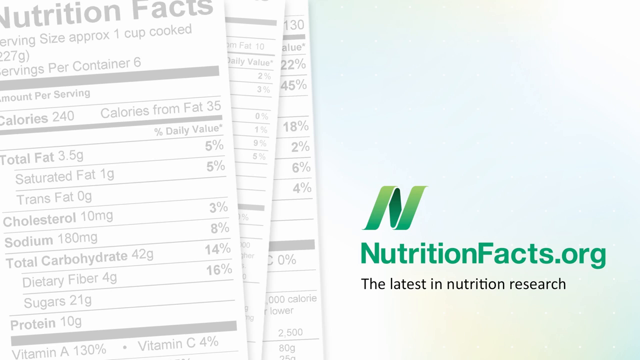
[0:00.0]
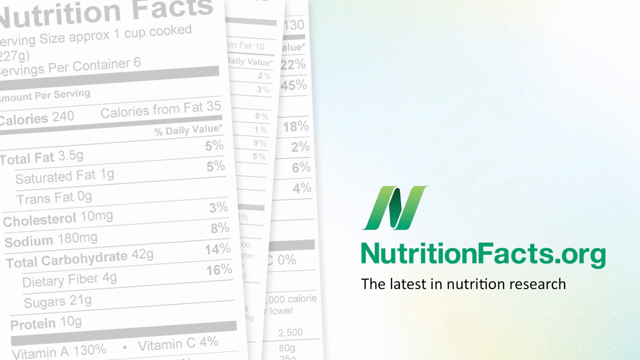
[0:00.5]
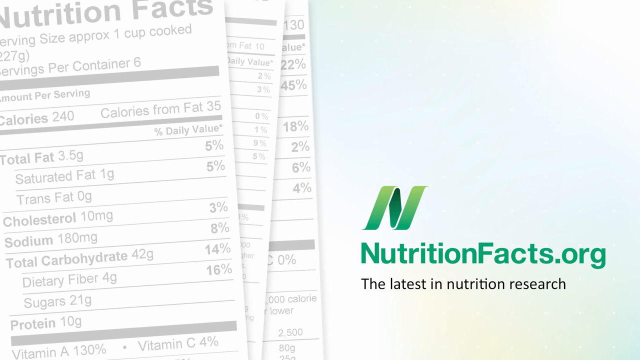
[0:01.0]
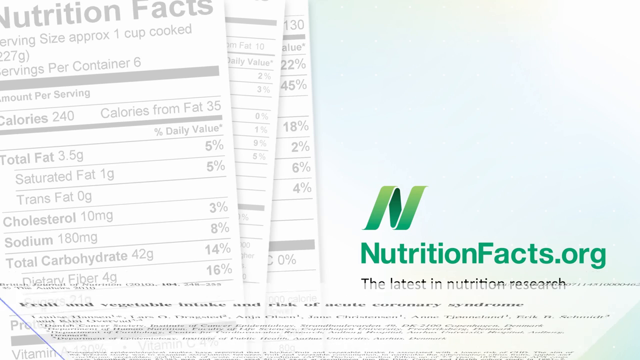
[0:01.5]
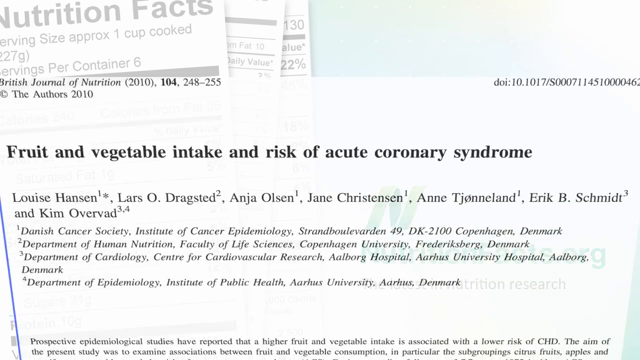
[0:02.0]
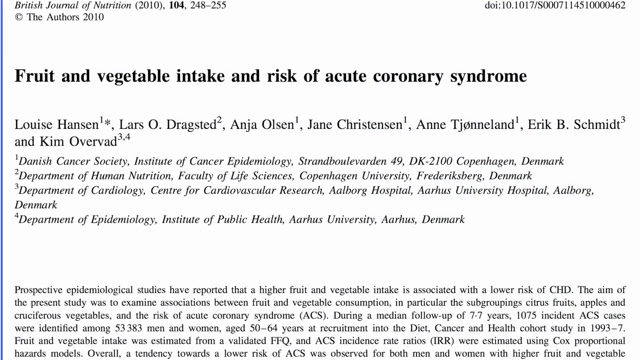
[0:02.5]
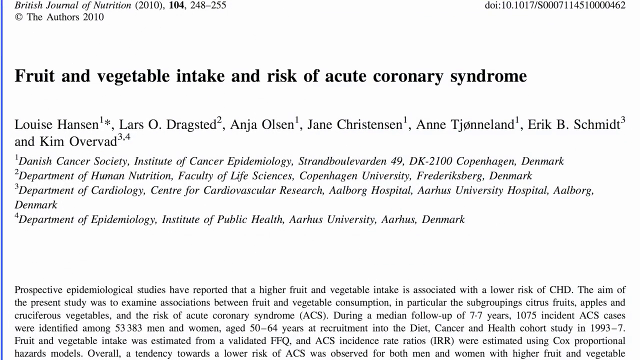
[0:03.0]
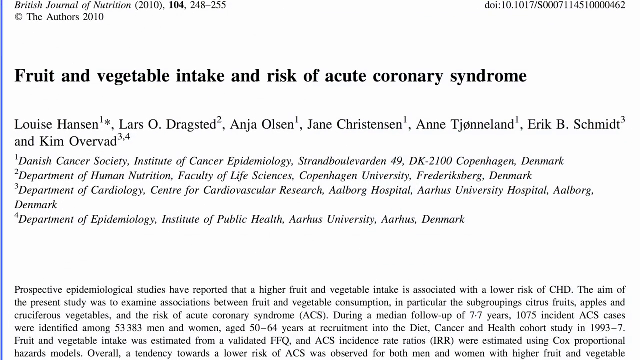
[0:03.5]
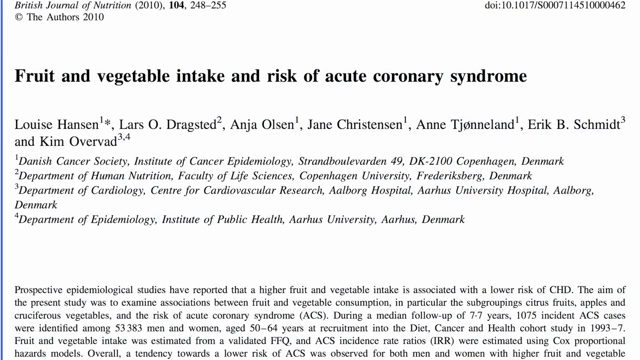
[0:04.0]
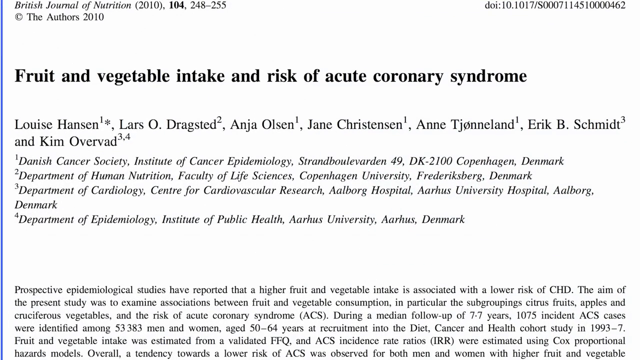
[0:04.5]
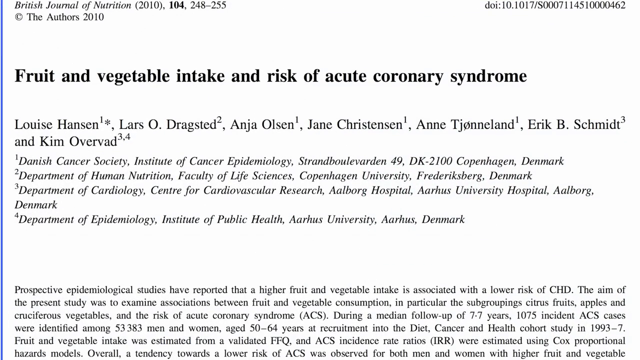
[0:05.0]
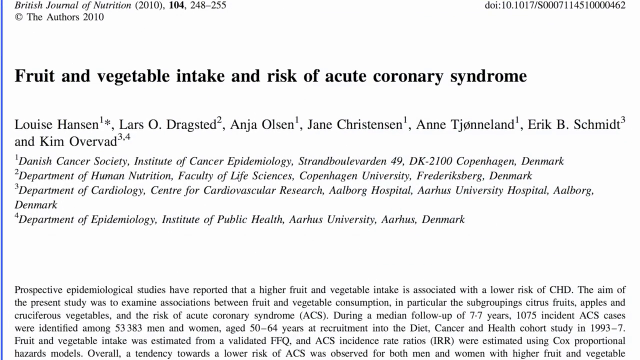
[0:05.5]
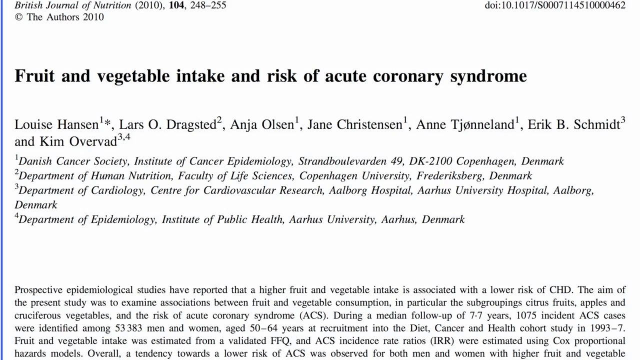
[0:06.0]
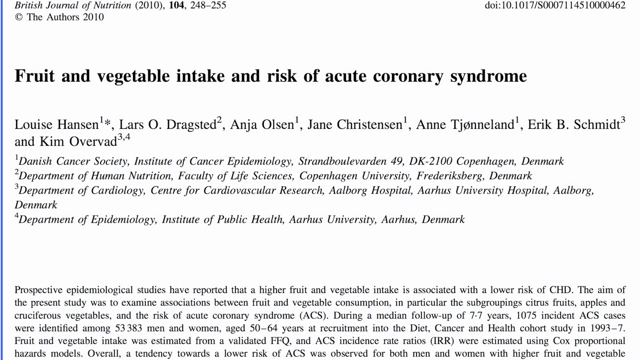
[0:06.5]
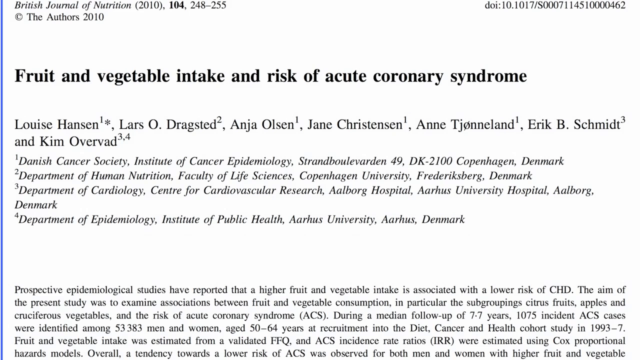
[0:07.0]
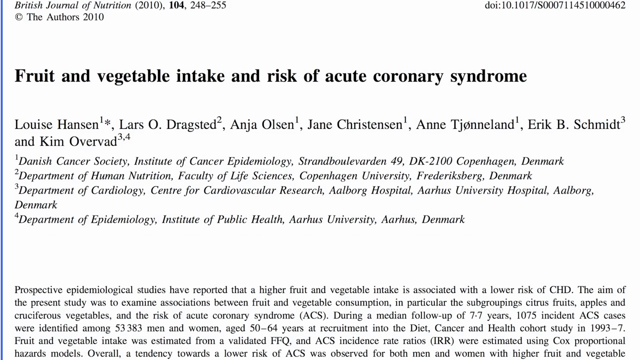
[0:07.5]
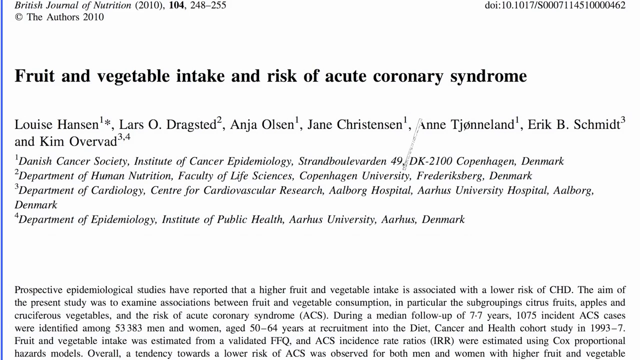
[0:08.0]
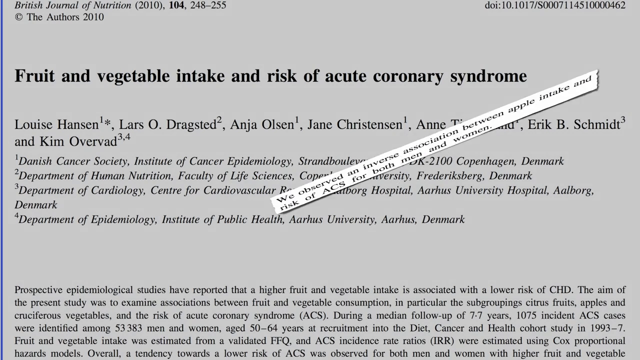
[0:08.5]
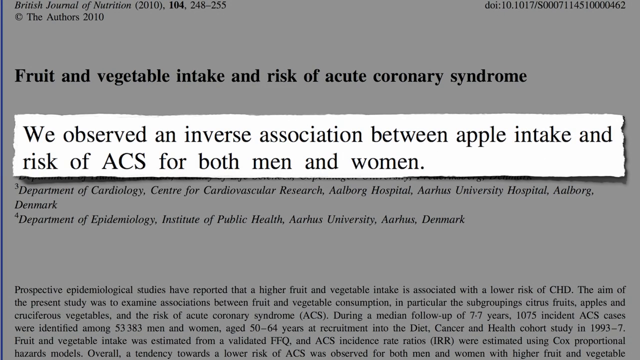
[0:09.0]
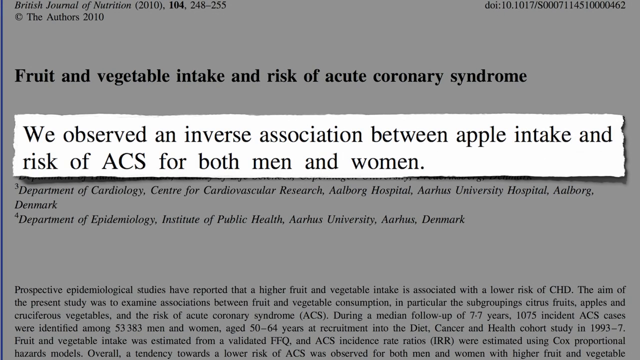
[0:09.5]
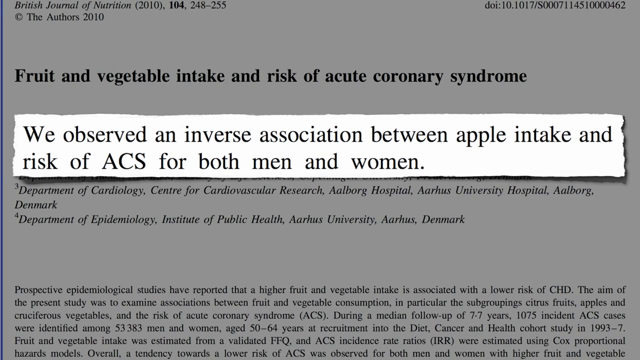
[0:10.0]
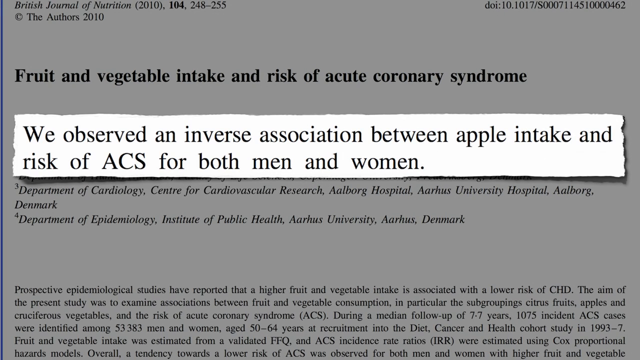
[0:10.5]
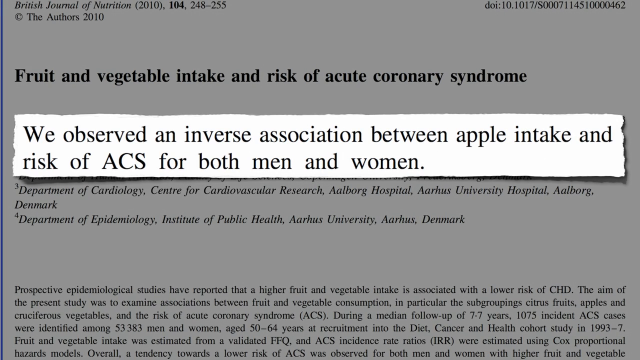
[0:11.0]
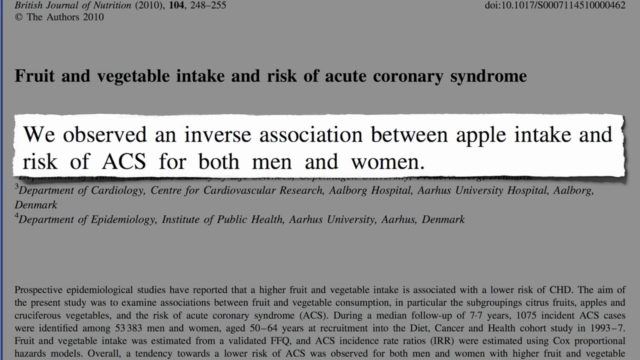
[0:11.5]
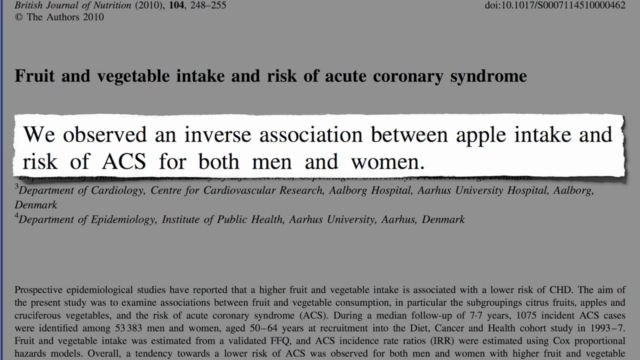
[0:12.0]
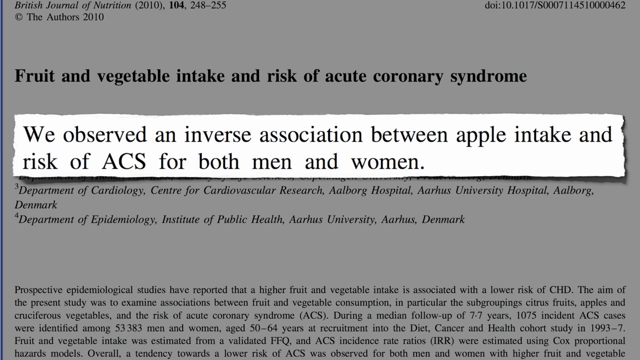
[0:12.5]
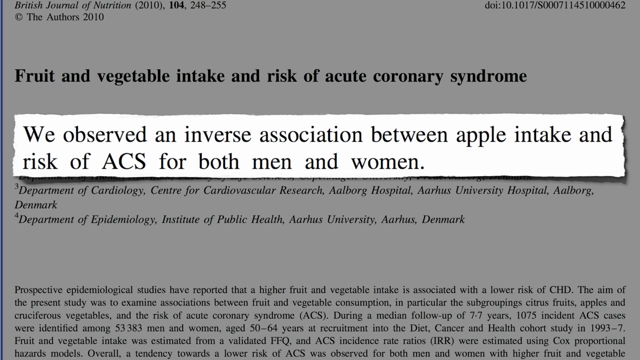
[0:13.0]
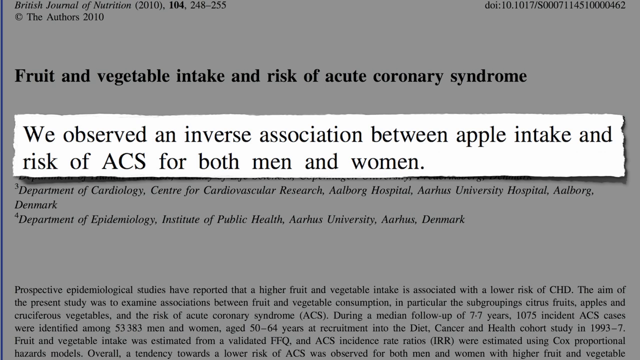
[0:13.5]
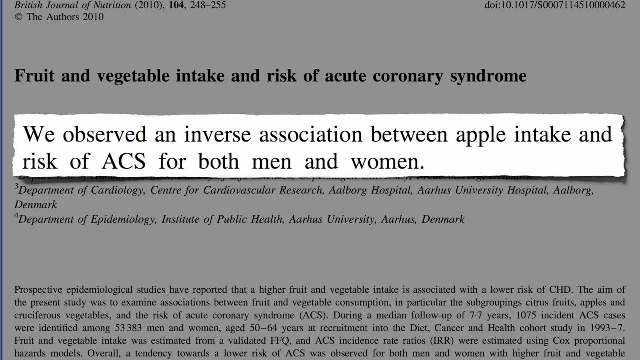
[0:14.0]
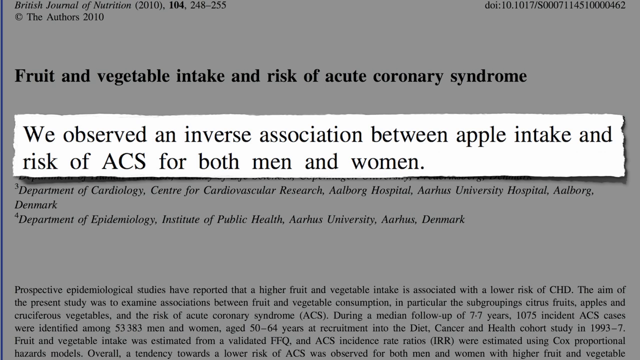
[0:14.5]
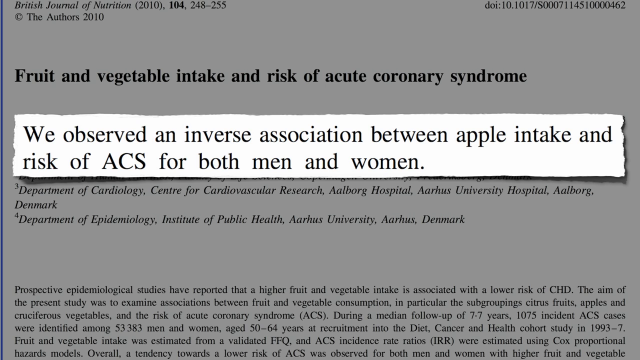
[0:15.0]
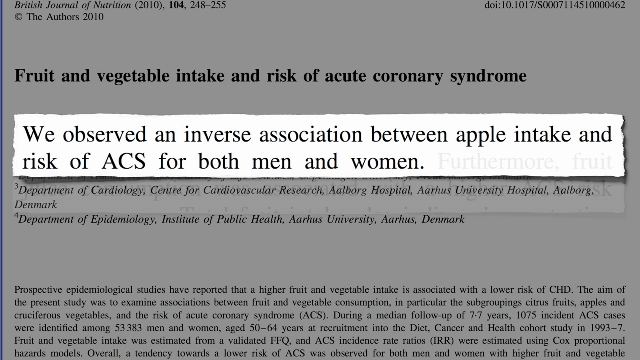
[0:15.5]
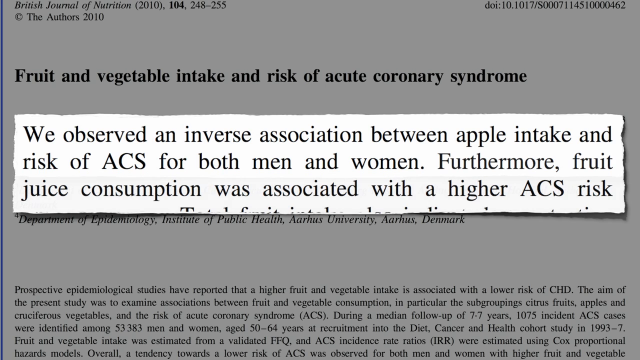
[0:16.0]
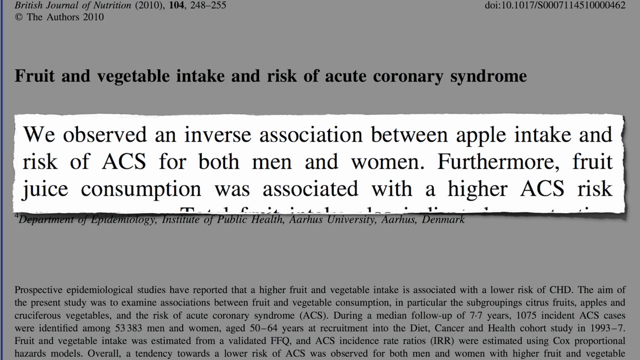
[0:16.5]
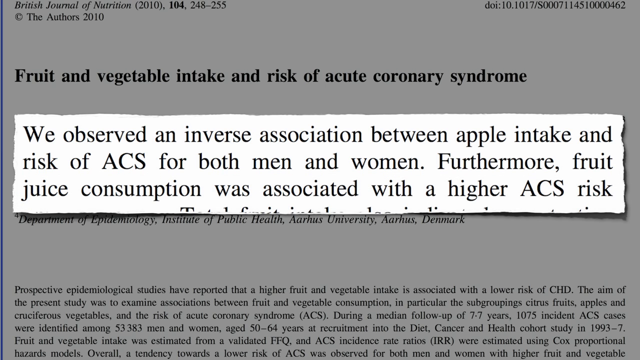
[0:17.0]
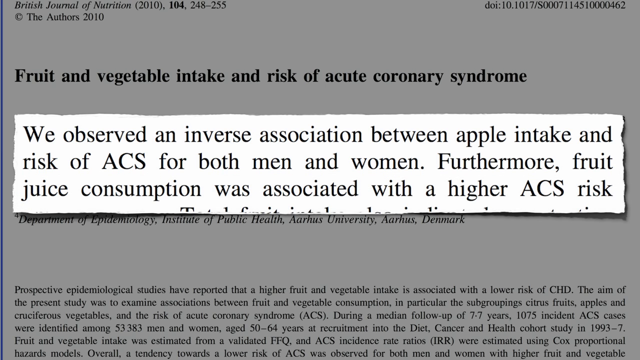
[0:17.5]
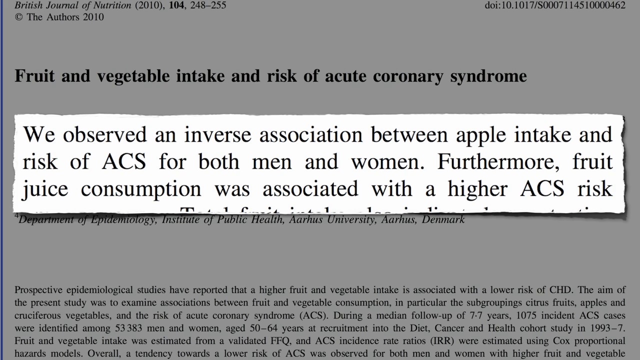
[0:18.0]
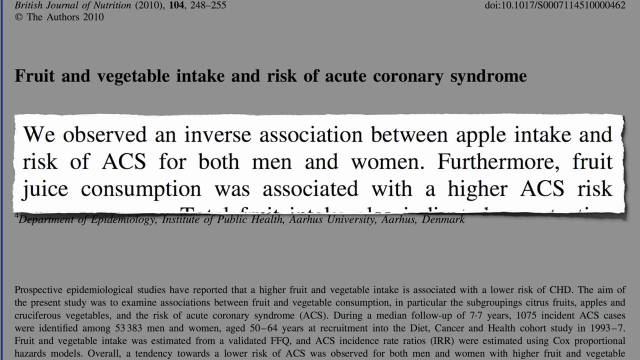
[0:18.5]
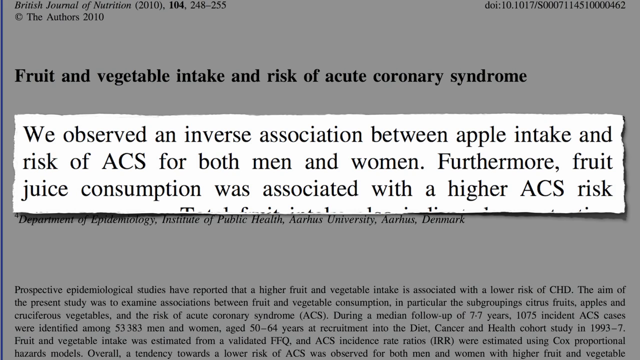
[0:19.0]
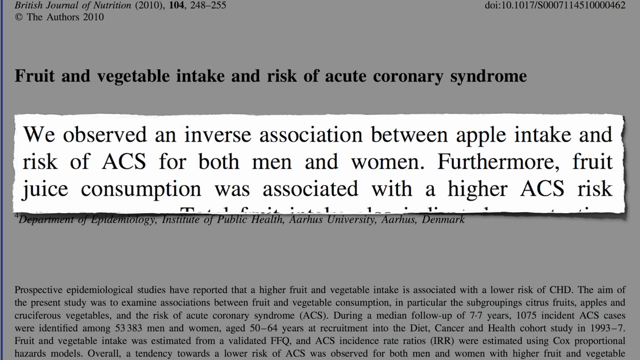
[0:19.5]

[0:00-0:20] The video is titled nutritionfacts.org, shown in green font on the right, with the text "the latest in nutrition research." On the left, very faint in the background, is one of the nutrition labels usually found on the side of a package; it has three slides of something, but only the front, first slide is really visible. The video then moves to a new slide showing the British Journal of Nutrition 2010 104 258-255, the author's copyright 2010, and the title "fruit and vegetable intake and risk of acute coronary syndrome," by Louise Hansen, Lars O. Dragsted, Anya Olsen, Jane Christensen, Anya Thion-Land, Eric B. Schmidt and Kim Overvaard, from the Danish Cancer Society in Denmark. The very bottom of the slide is hard to read, but it says "perspective studies have reported that a high fruit and vegetable intake is associated with a lower risk of CHD. The aim of the present study was to examine associations between fruit and vegetable consumption particularly in the subgroups citrus fruits apples"; the text gets dark and goes on to mention cruciferous vegetables and the risk of acute coronary syndrome. Superimposed on top in a big font is text essentially saying that both men and women who eat apples have been shown to be doing better with their health.